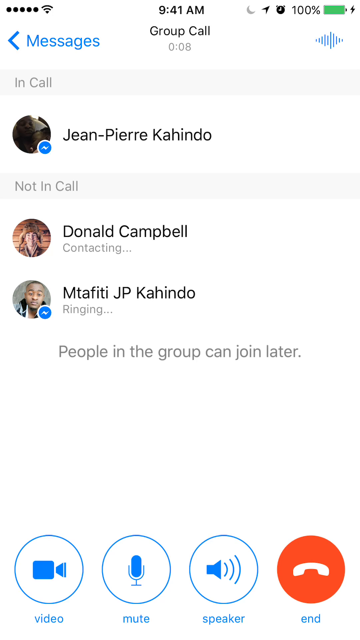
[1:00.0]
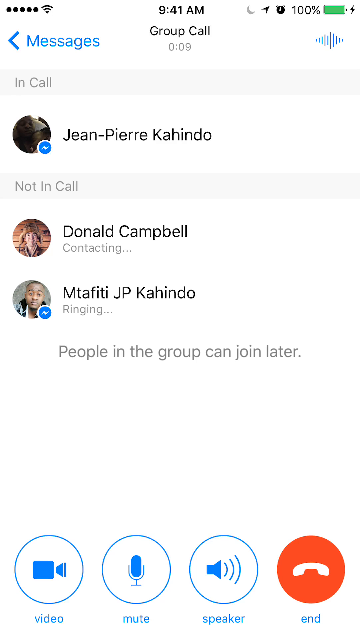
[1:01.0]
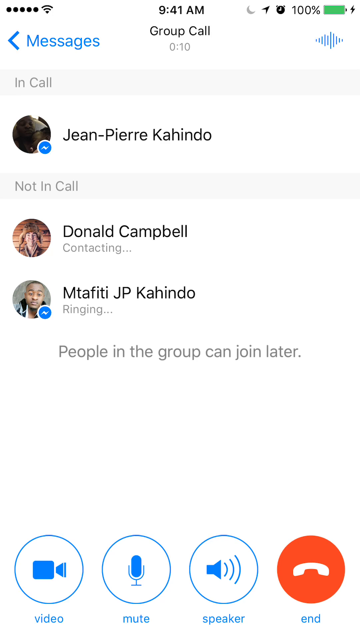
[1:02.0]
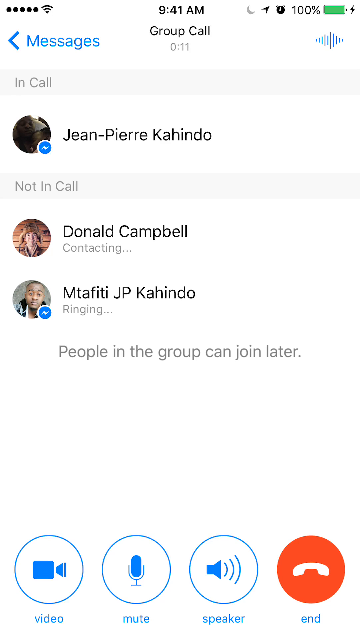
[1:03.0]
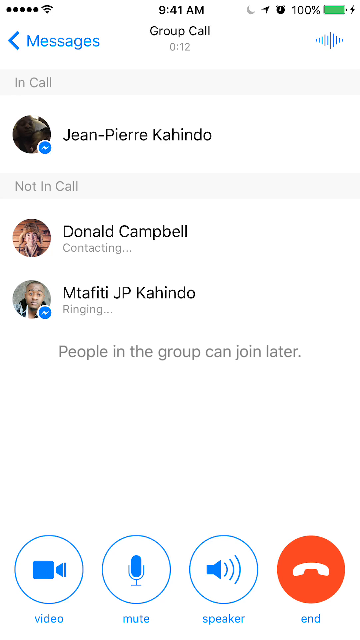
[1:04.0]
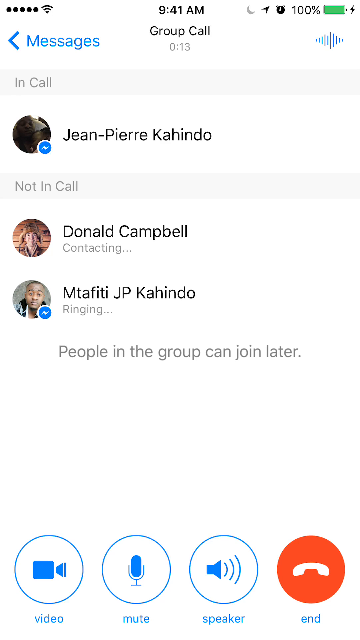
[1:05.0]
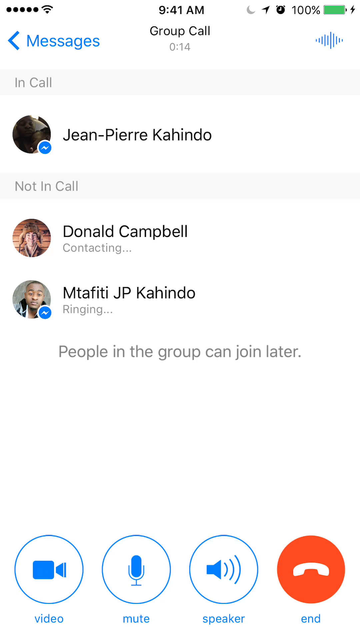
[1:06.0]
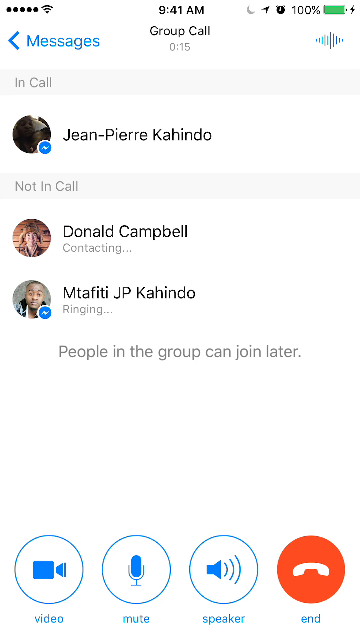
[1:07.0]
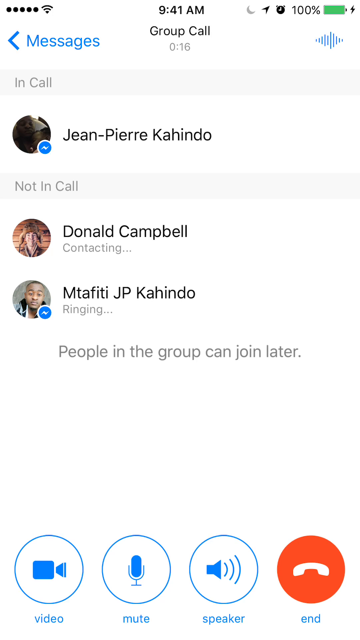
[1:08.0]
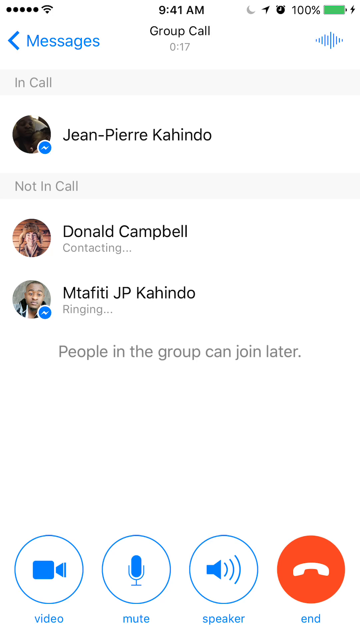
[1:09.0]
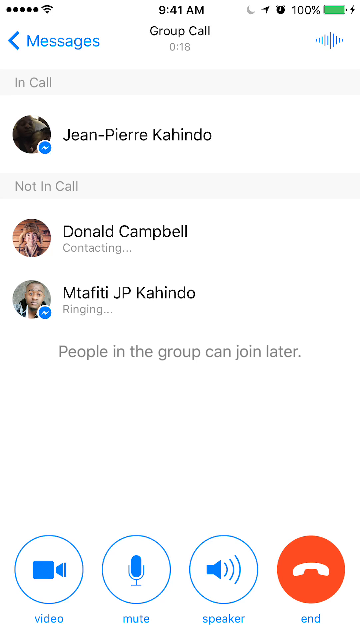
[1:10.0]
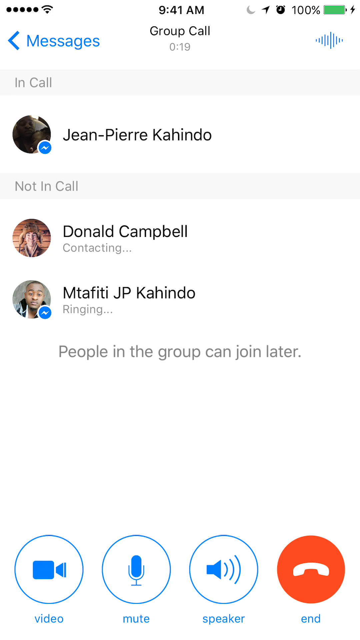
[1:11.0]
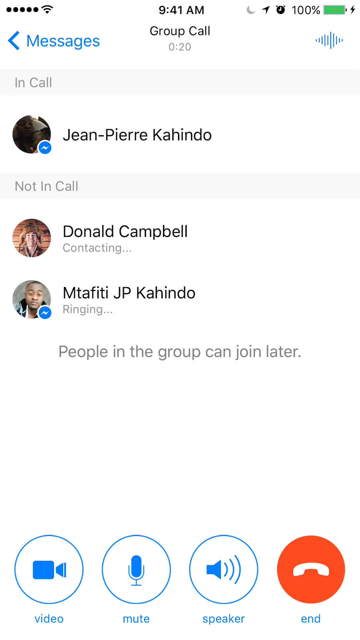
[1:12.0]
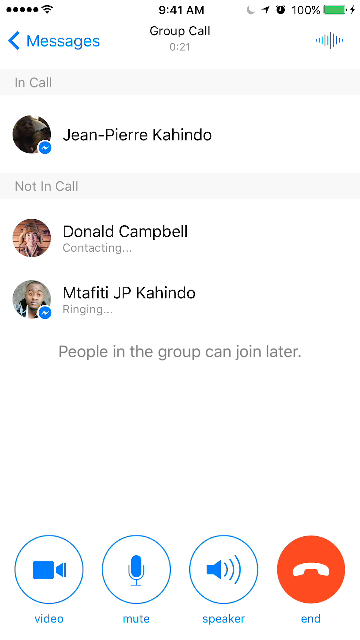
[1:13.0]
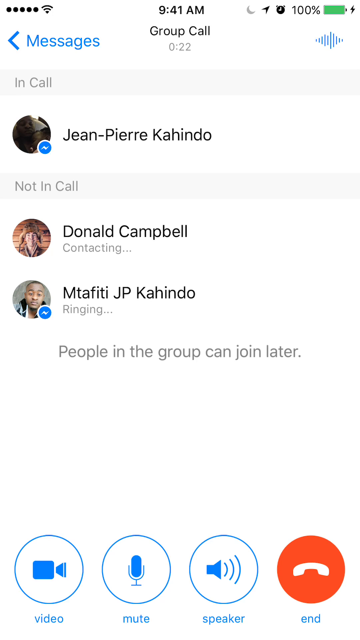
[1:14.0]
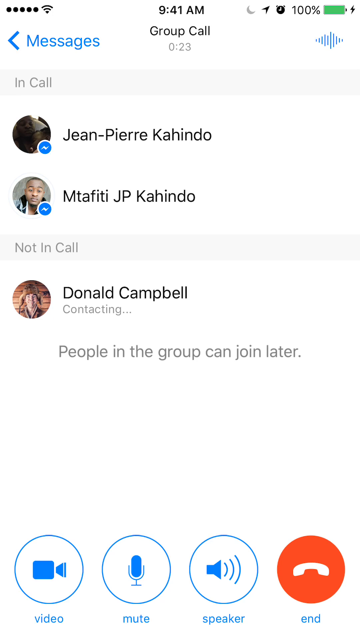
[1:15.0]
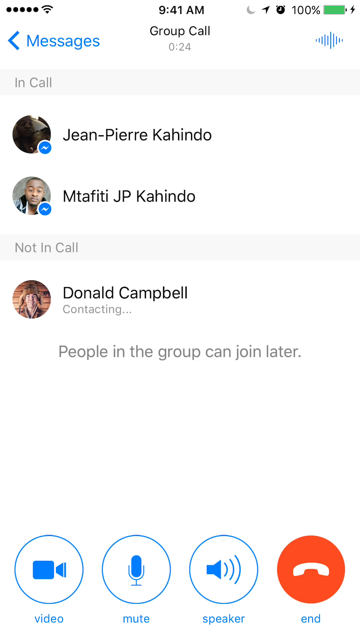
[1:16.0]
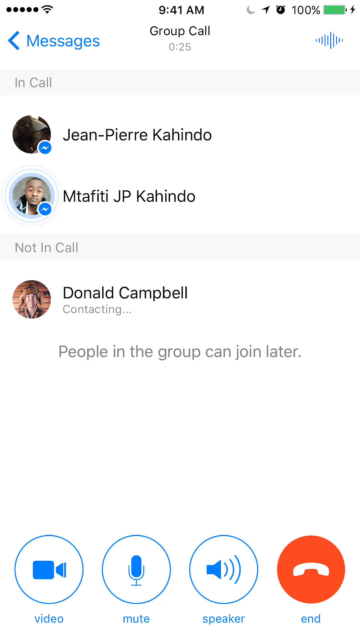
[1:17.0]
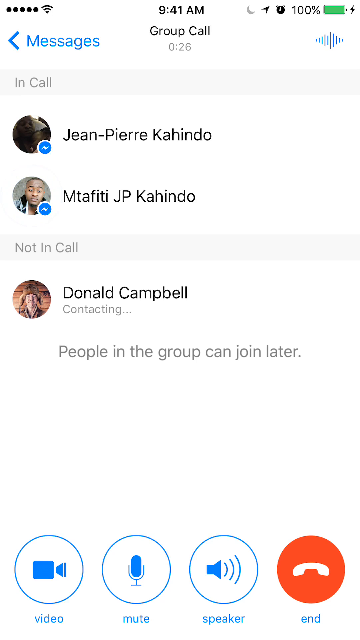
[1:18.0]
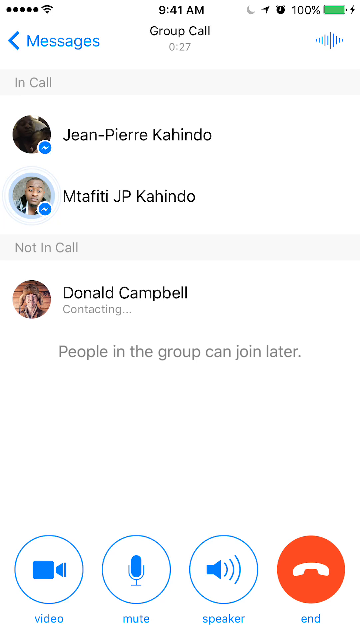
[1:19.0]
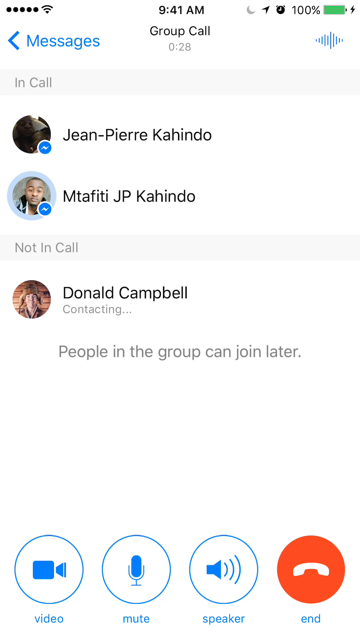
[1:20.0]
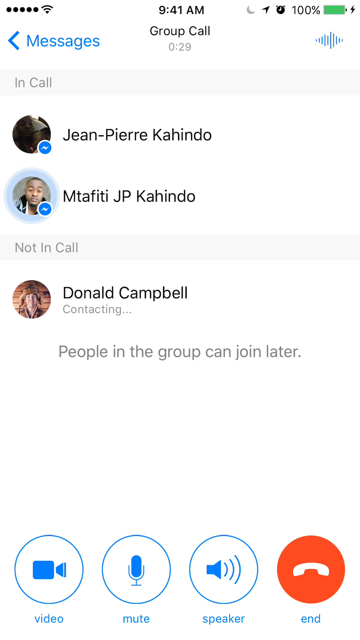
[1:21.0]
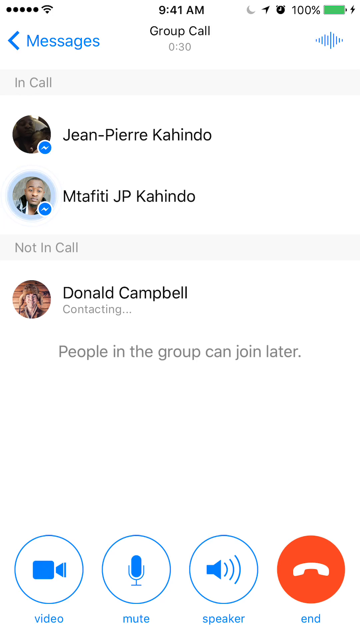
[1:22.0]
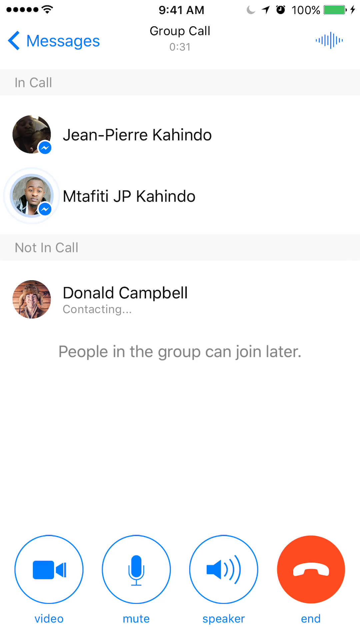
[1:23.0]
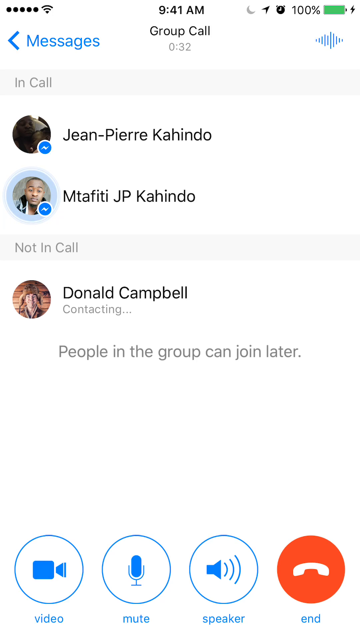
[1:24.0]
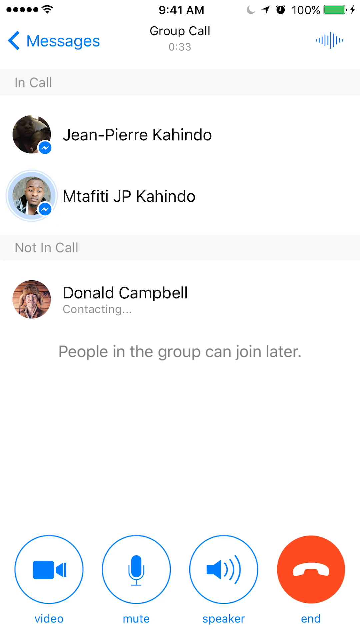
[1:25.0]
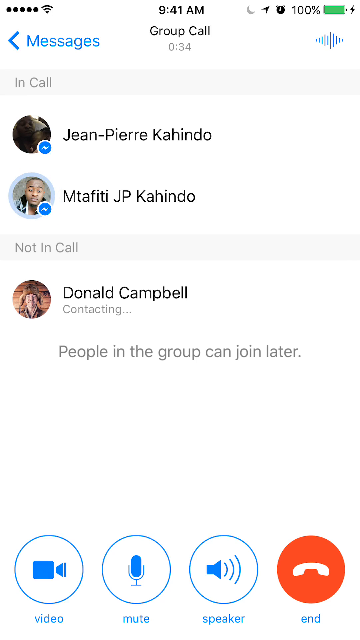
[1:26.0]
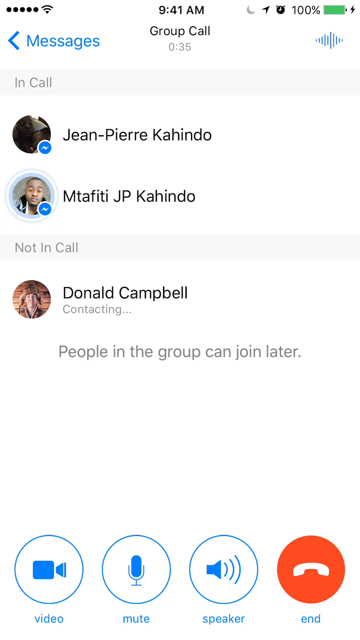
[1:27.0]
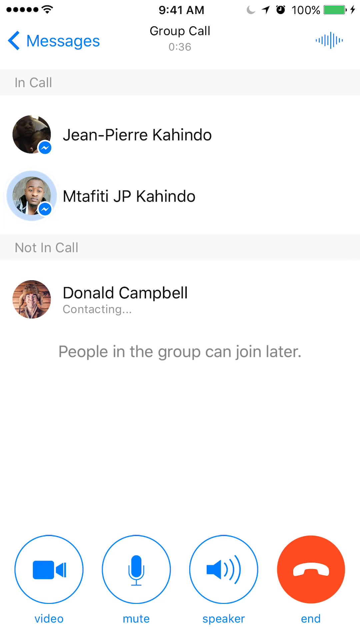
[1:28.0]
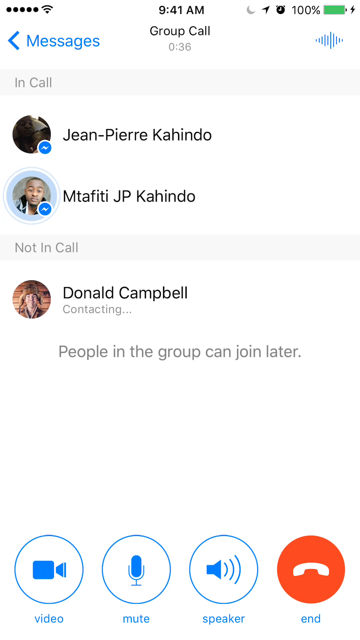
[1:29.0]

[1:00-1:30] A group call is in progress in the Messenger app on a cell phone. Five circles in the top left corner indicate full signal, and on the right a fully green battery symbol reads "100%". The center shows 9:41 AM, with "group call" and a timer at eight seconds beneath it. Under that, "in call" lists Jean-Pierre Cahindo, and below, "not in call" shows Donald Campbell "contacting" and Mita Fiti JP Cahindo "ringing". At the very bottom is "people in the group can join later", along with icons for video call, microphone, sound and hanging up. The screen holds while the other people in the group are being contacted, and the timer keeps counting through 17, 18, 19, 20, 21 and 22 seconds. Then Mita Fiti JP Cahindo joins the call. A blue circle around his name lights up each time he talks, and it keeps lighting up as the timer climbs to 34 seconds.